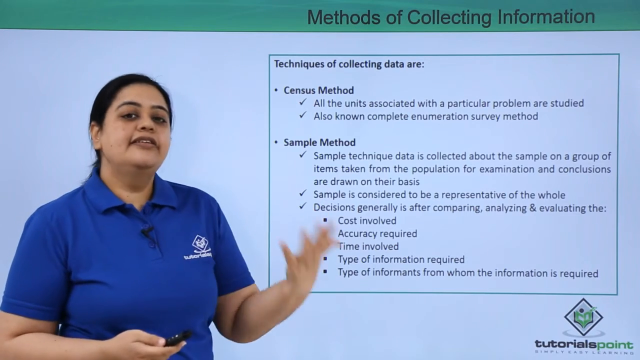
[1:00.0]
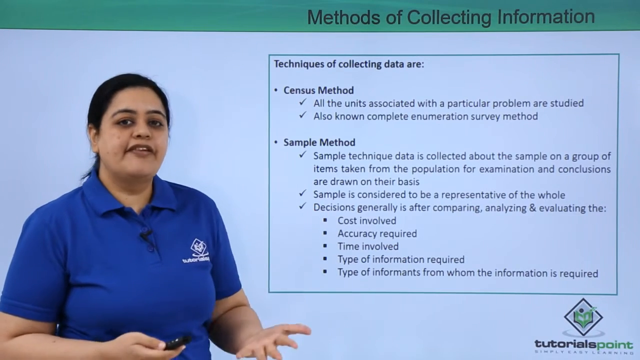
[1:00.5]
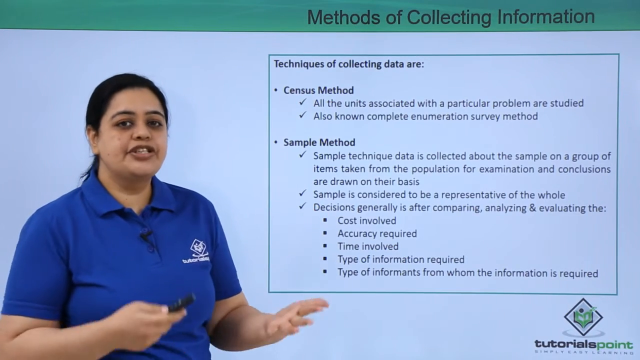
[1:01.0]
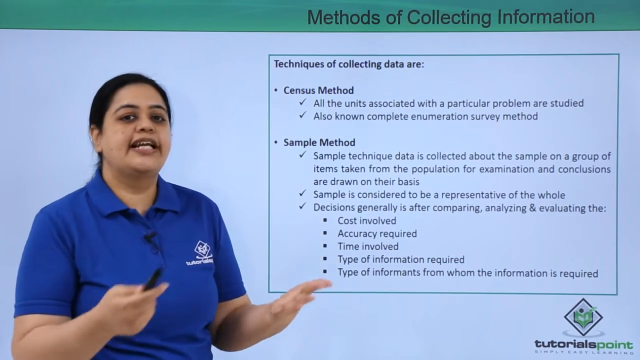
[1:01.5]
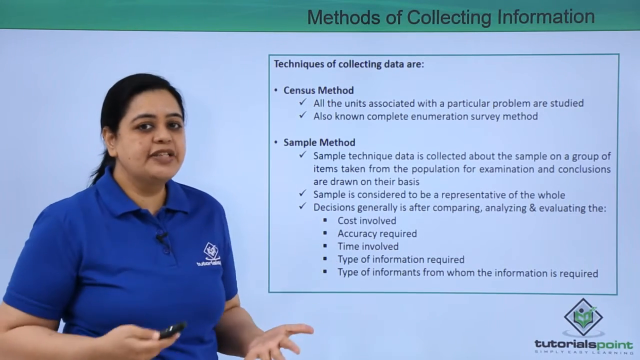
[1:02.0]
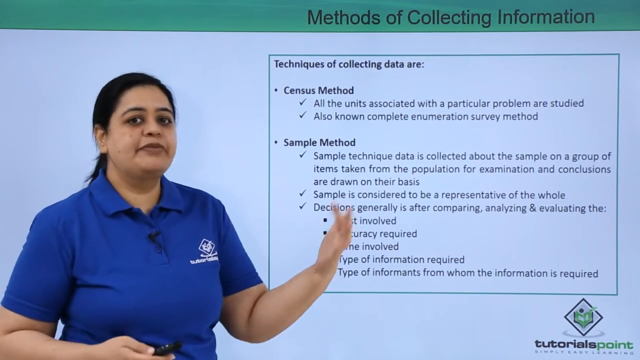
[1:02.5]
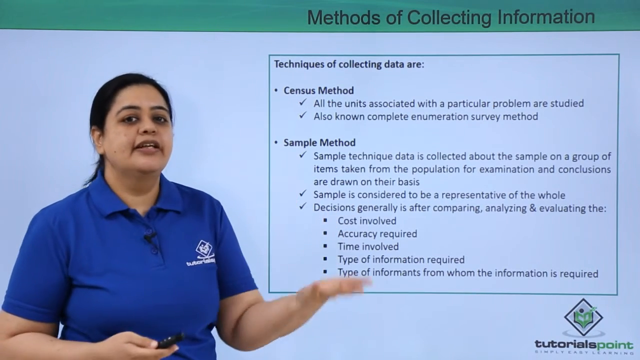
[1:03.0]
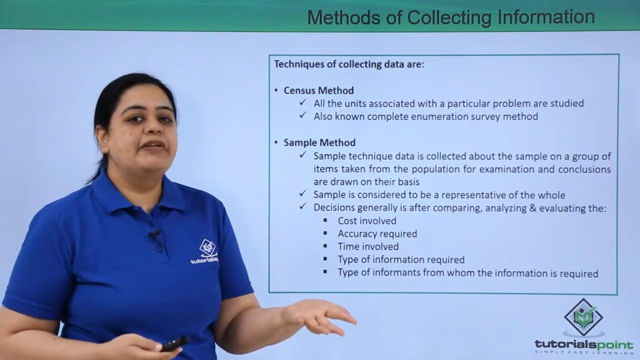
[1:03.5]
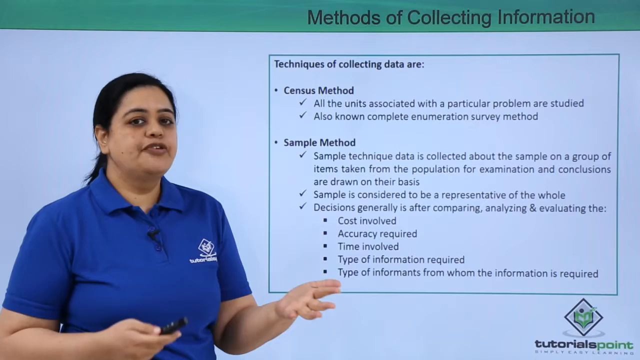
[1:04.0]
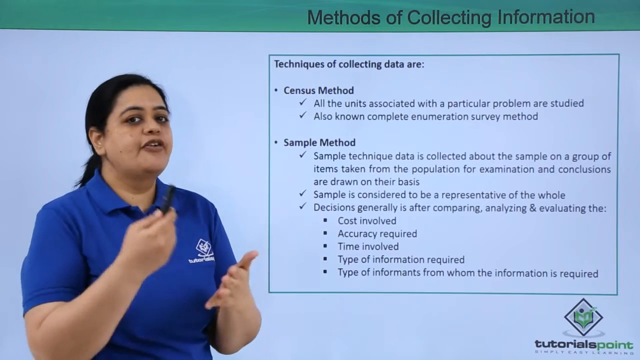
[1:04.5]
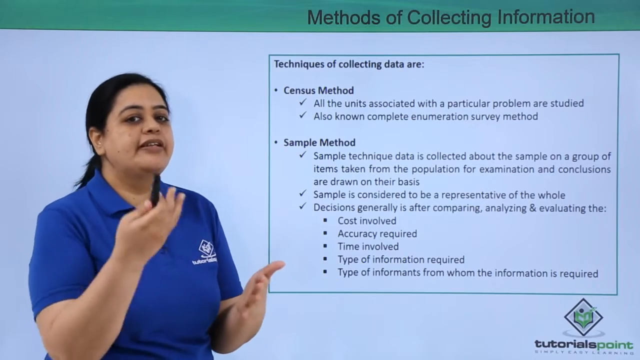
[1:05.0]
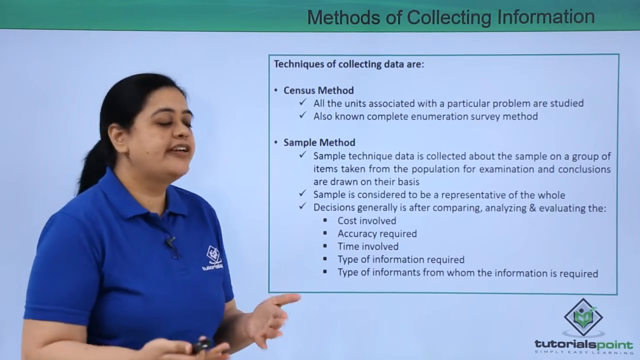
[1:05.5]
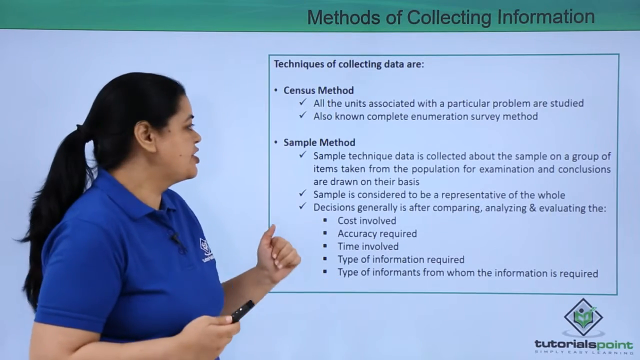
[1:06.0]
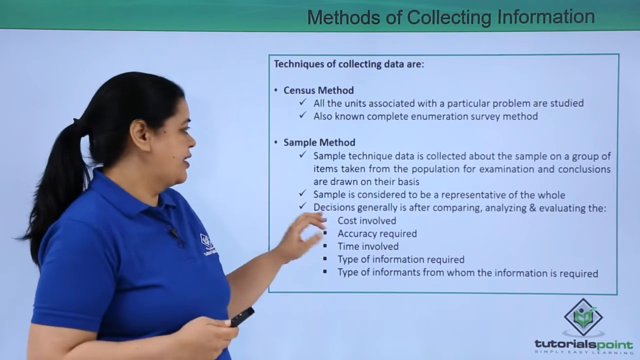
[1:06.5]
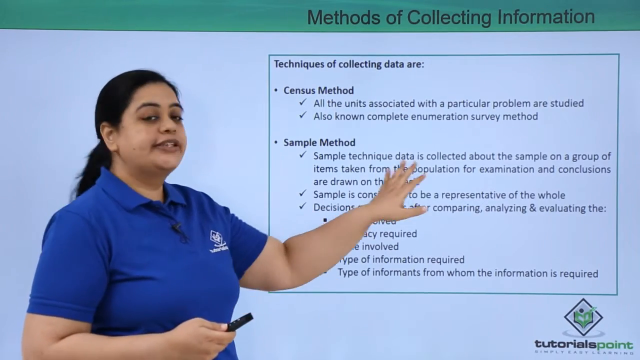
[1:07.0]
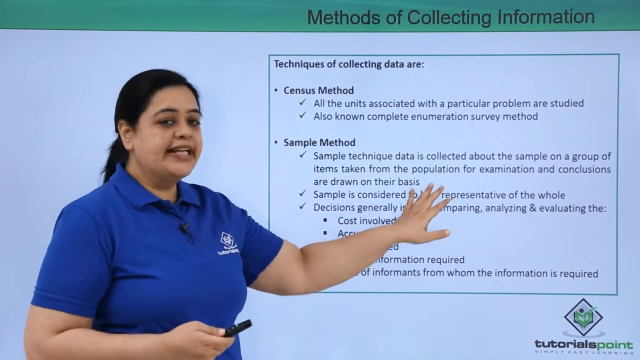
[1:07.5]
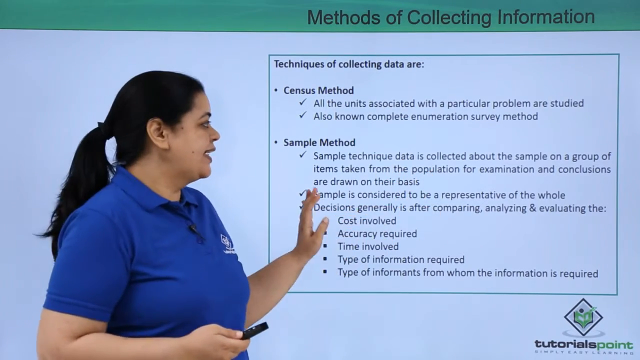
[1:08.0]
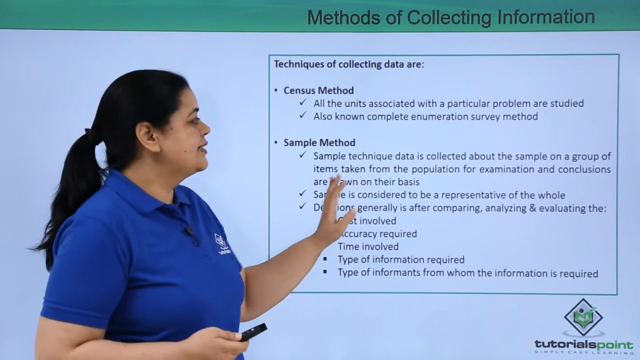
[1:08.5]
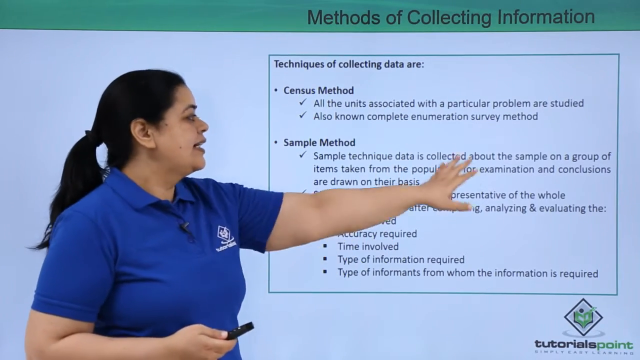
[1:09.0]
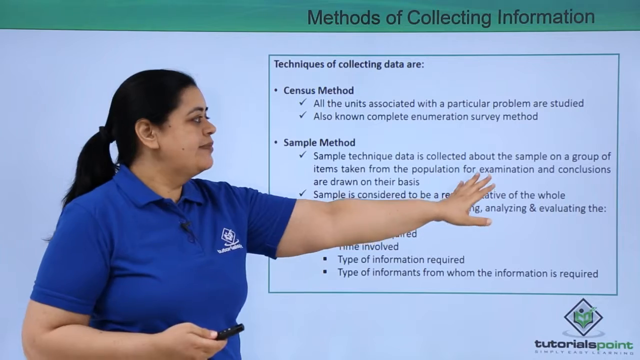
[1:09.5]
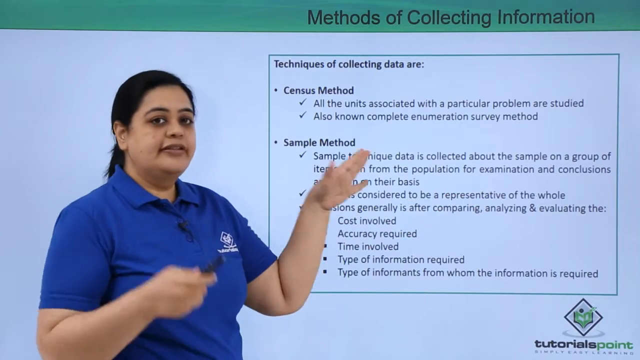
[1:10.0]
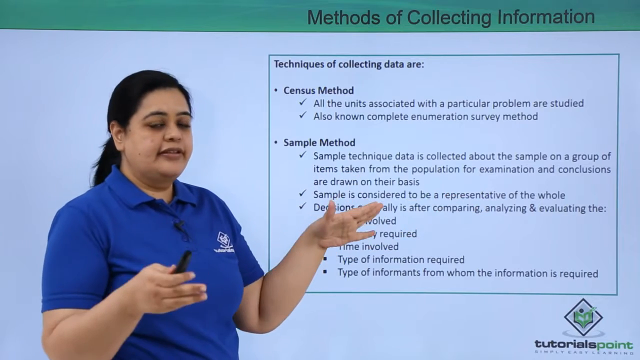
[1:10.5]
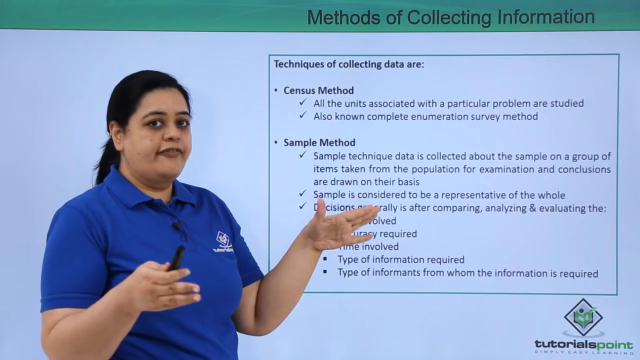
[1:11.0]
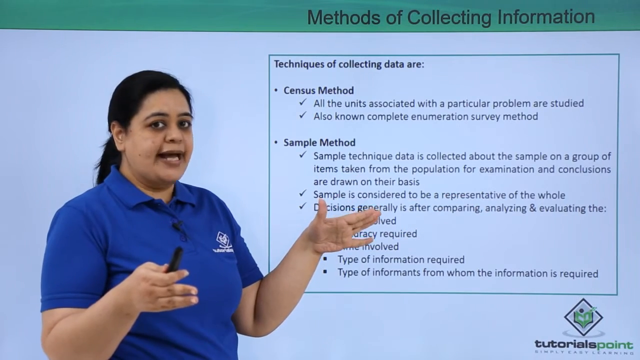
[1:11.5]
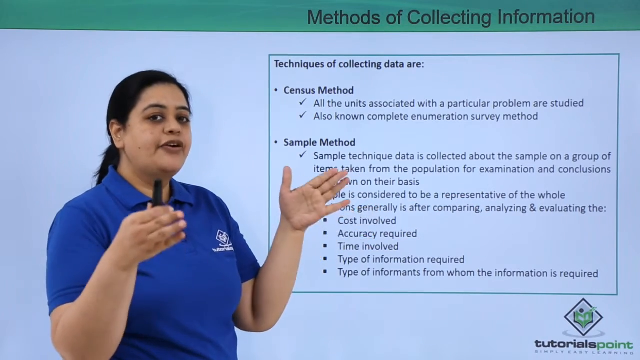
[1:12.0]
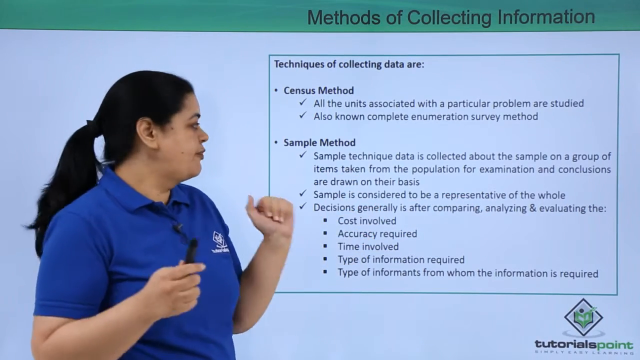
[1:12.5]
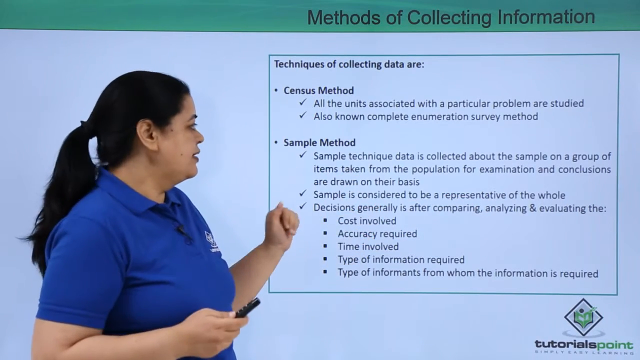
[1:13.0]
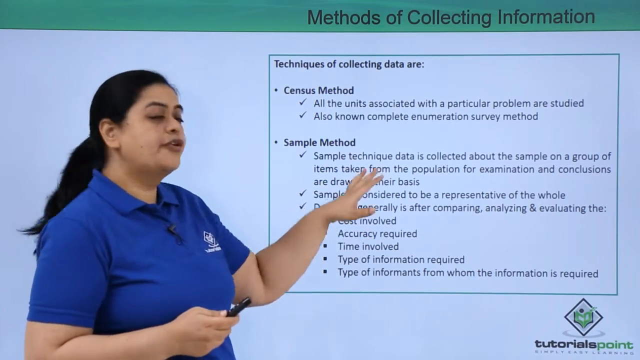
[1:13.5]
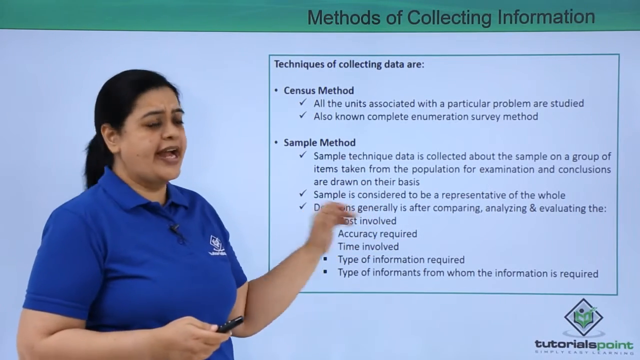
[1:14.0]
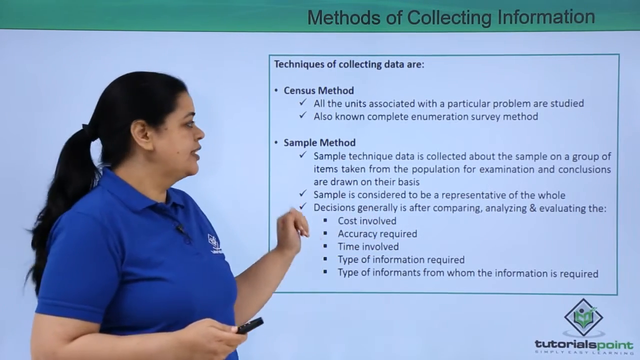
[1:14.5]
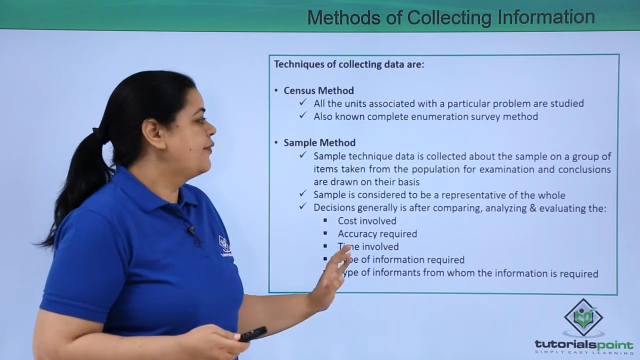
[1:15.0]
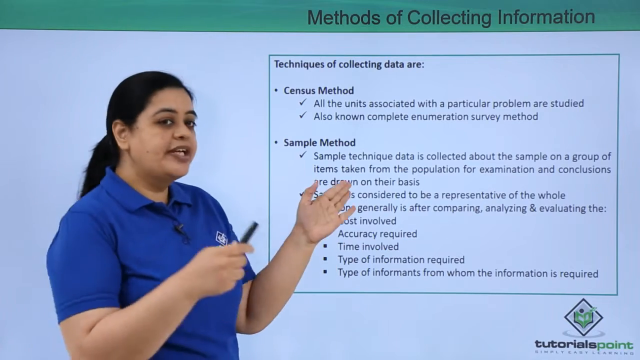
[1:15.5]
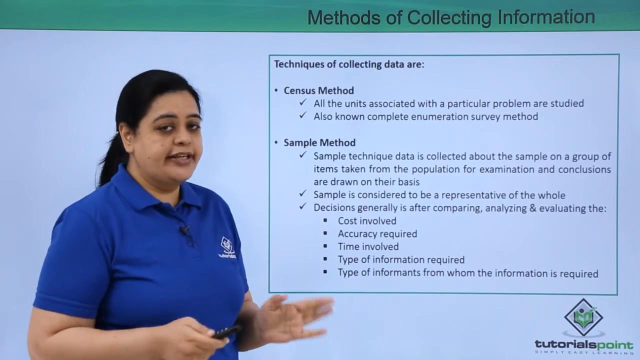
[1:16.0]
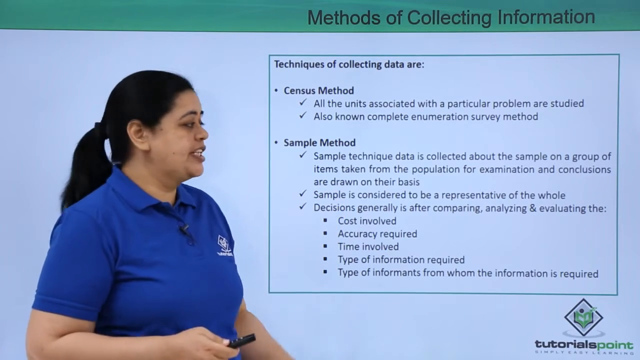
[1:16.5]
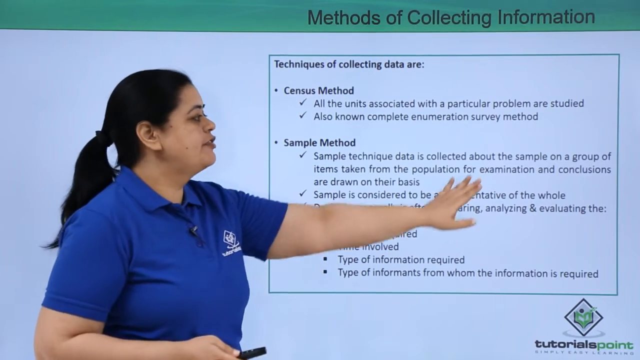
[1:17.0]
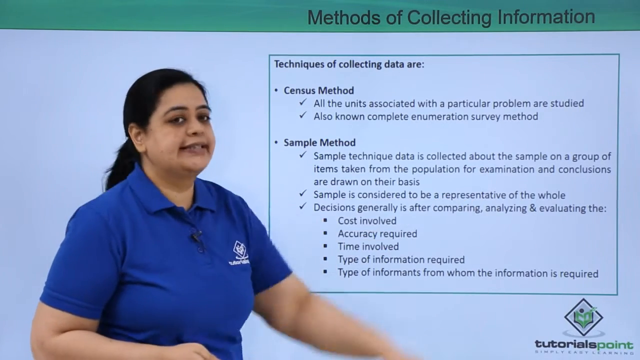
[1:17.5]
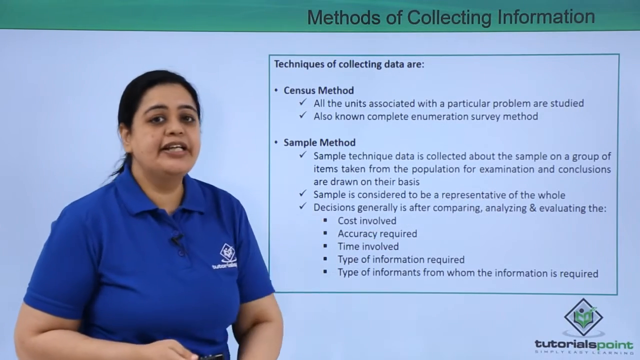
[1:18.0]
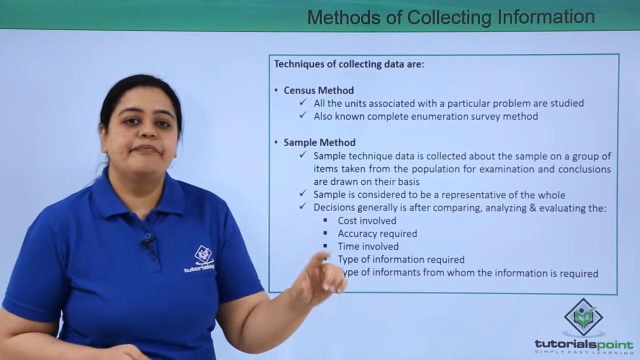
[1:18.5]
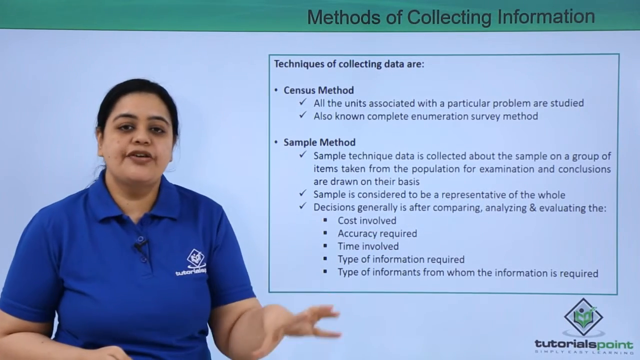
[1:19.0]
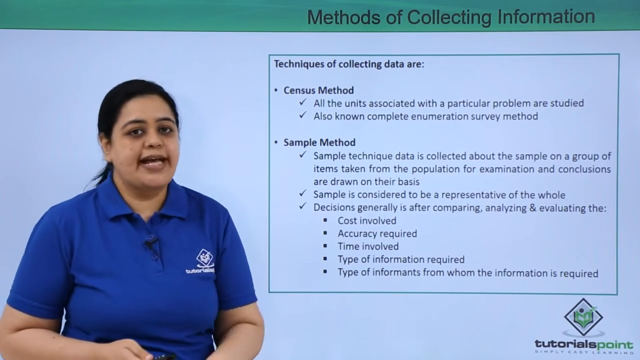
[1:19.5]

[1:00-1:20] The same woman continues to lecture in the same room, in front of what may be a PowerPoint presentation. She wears a blue polo, a sort of work uniform shirt with the company logo on the upper right part. She gestures a lot, sometimes toward the printed words on the surface behind her, and her theme is methods of collecting information. She has some moles on her face, somewhat fair skin, and long dark hair pulled back in a low ponytail. The video glitches quite a bit.